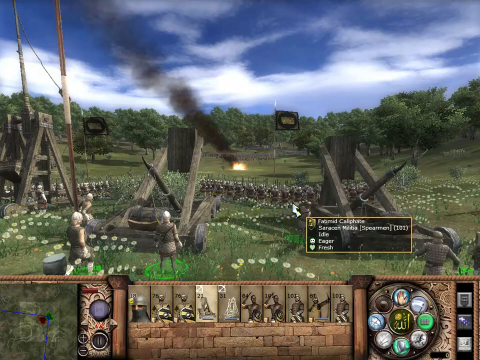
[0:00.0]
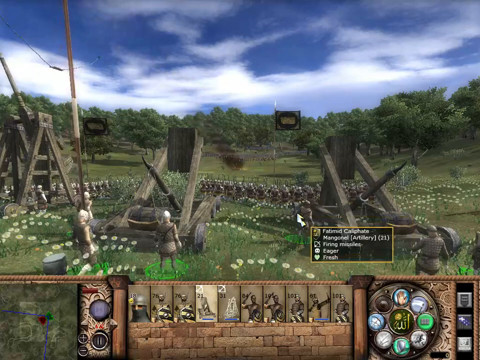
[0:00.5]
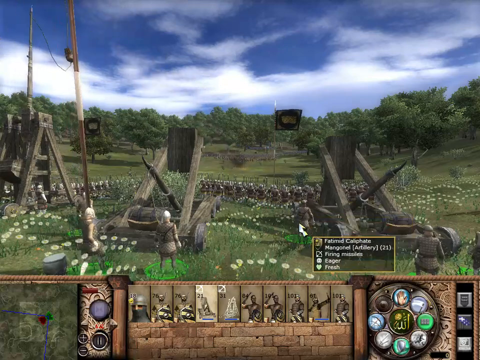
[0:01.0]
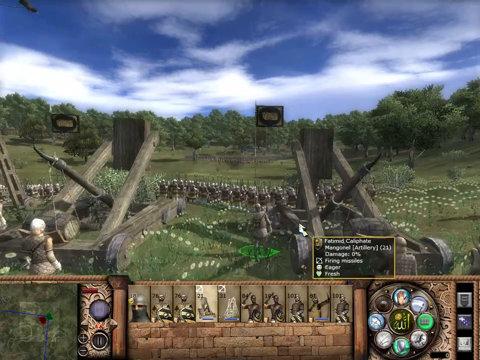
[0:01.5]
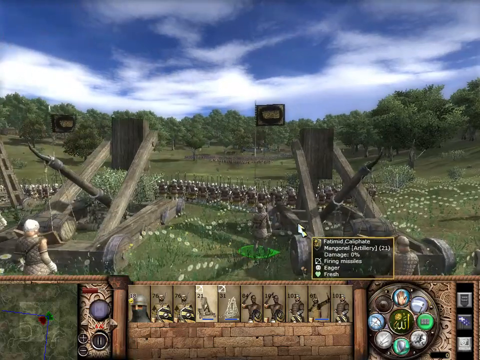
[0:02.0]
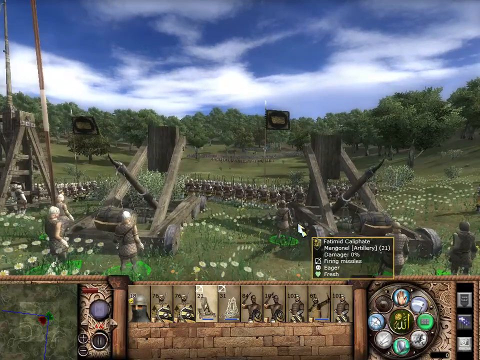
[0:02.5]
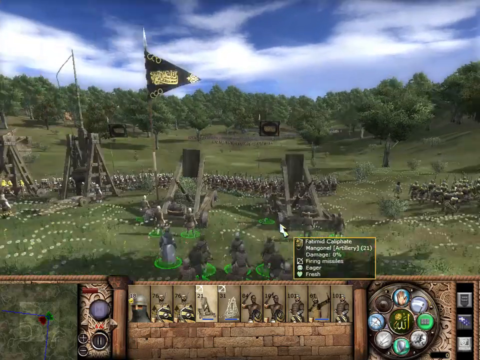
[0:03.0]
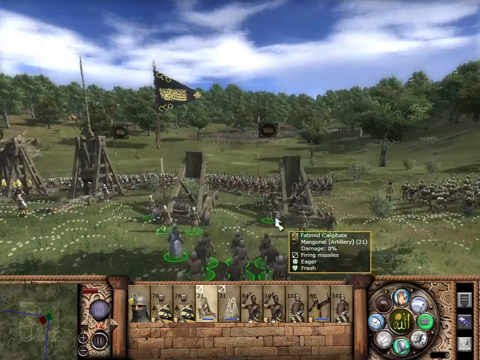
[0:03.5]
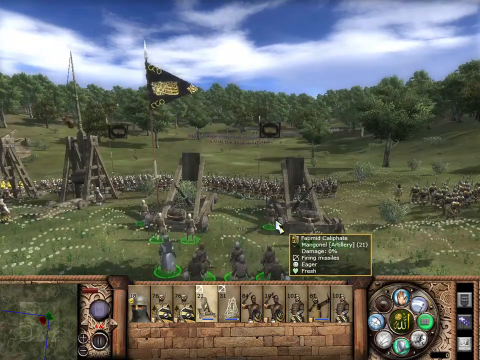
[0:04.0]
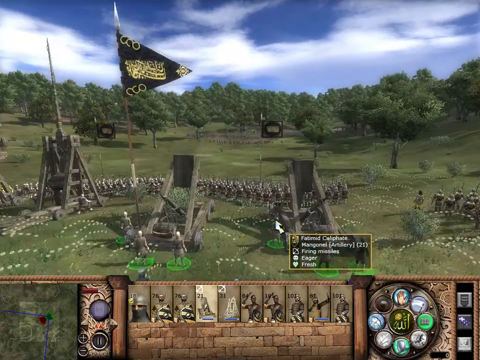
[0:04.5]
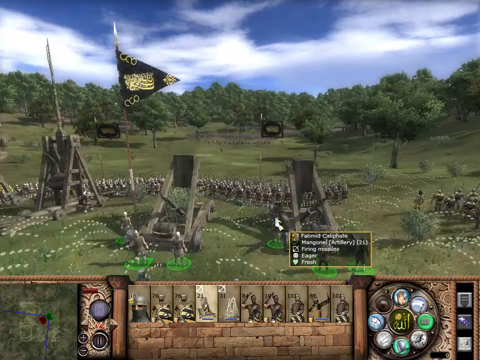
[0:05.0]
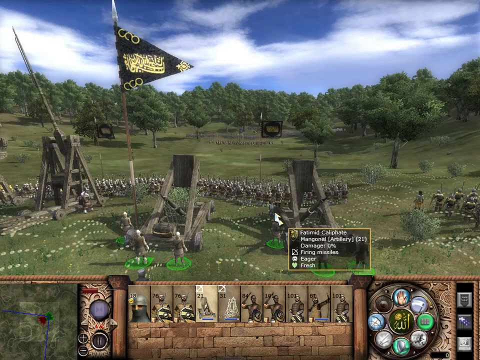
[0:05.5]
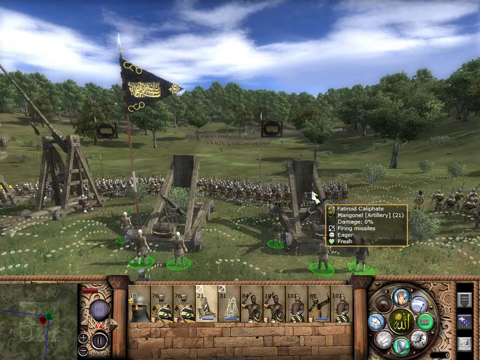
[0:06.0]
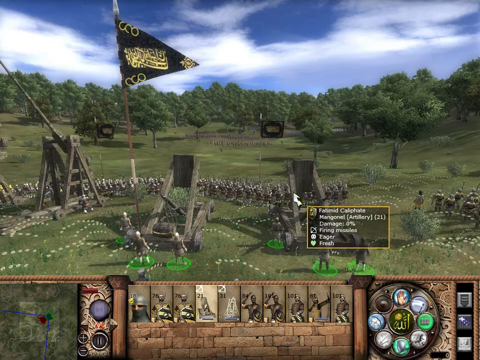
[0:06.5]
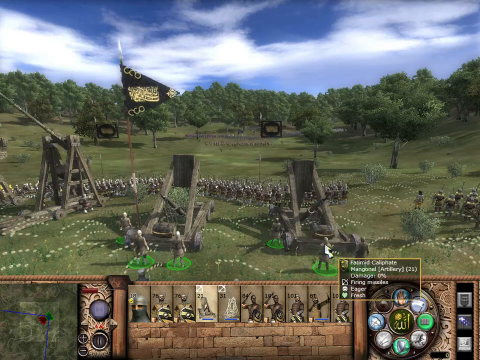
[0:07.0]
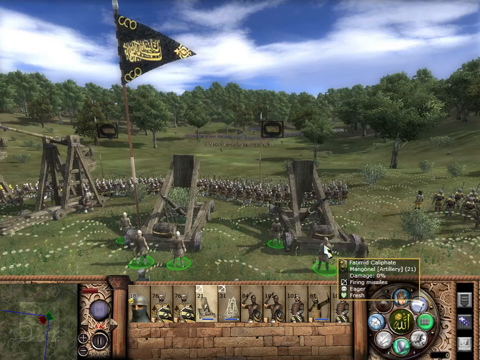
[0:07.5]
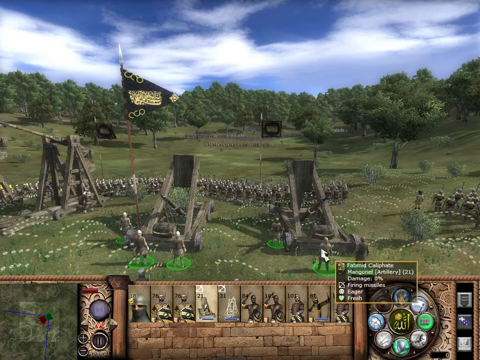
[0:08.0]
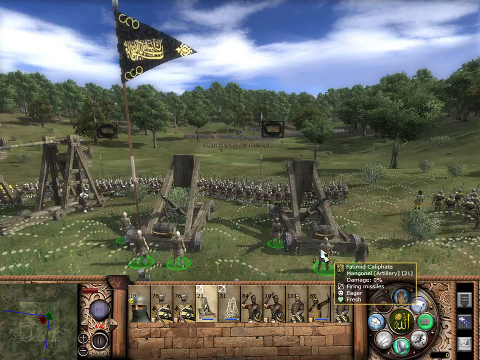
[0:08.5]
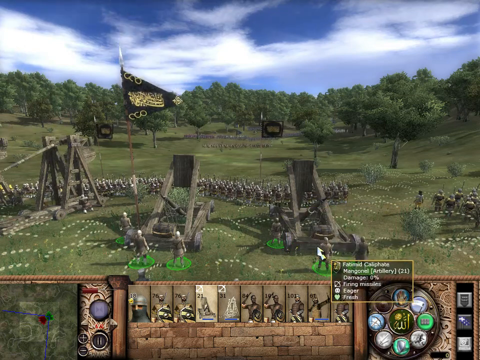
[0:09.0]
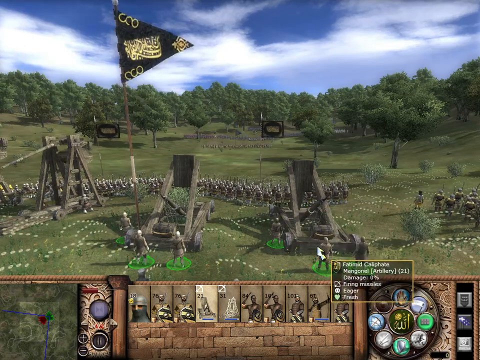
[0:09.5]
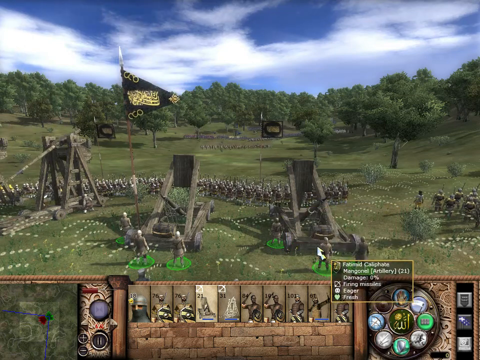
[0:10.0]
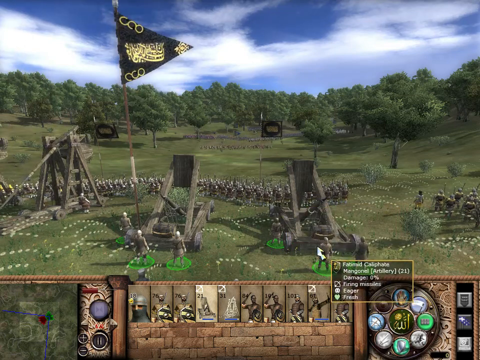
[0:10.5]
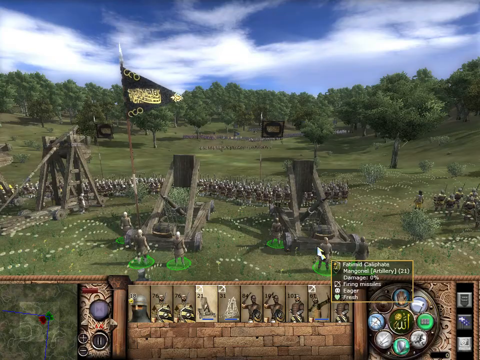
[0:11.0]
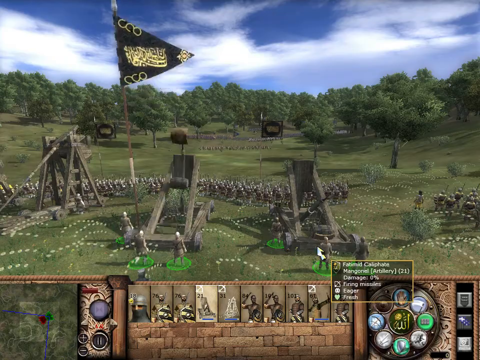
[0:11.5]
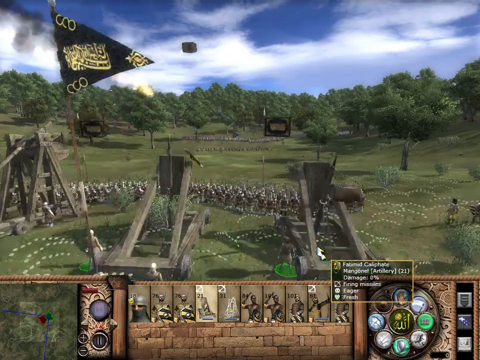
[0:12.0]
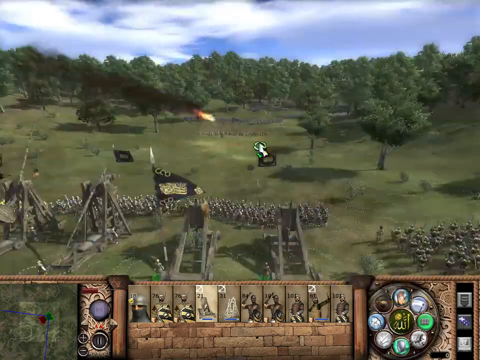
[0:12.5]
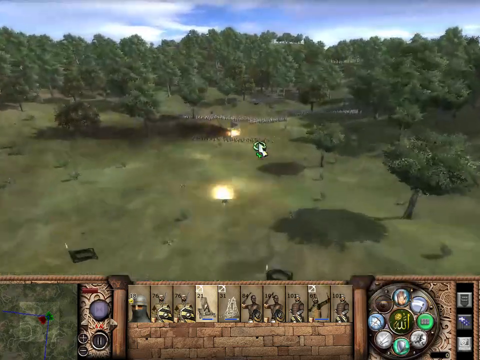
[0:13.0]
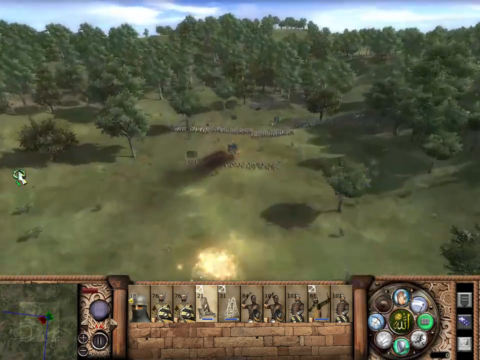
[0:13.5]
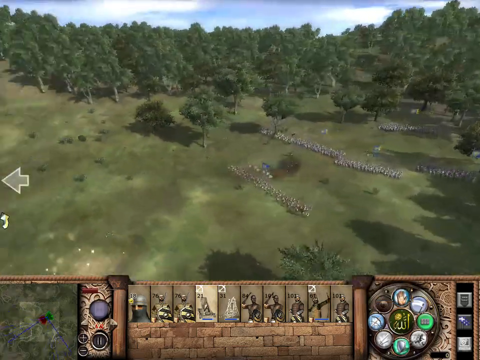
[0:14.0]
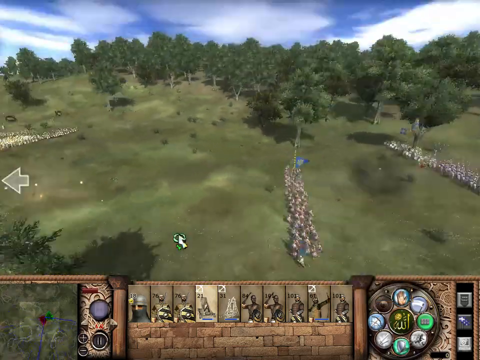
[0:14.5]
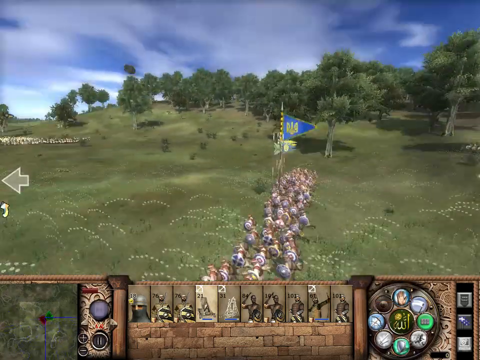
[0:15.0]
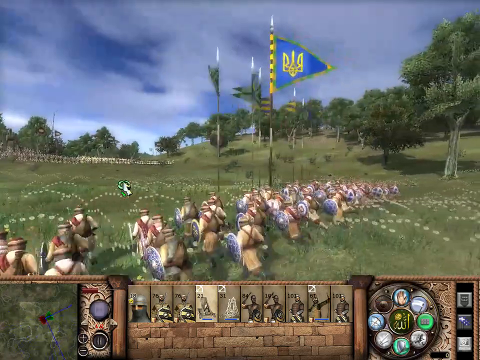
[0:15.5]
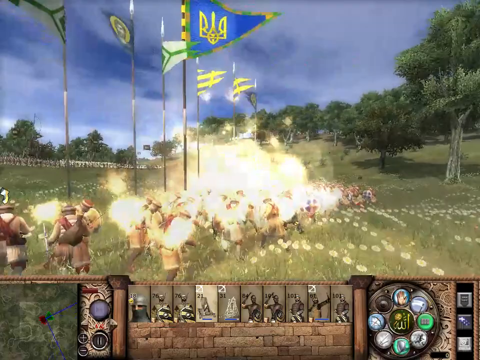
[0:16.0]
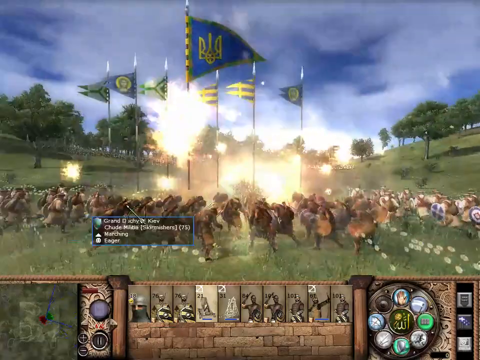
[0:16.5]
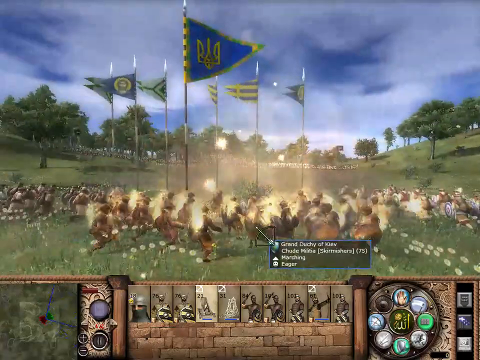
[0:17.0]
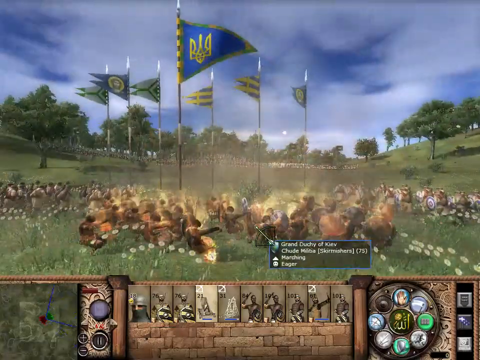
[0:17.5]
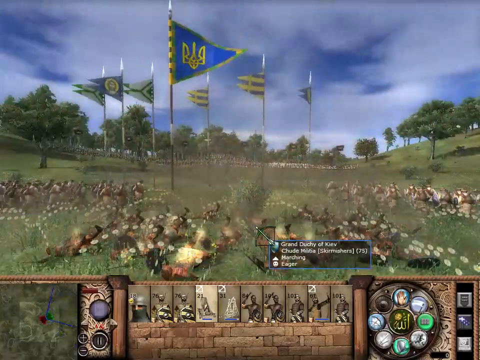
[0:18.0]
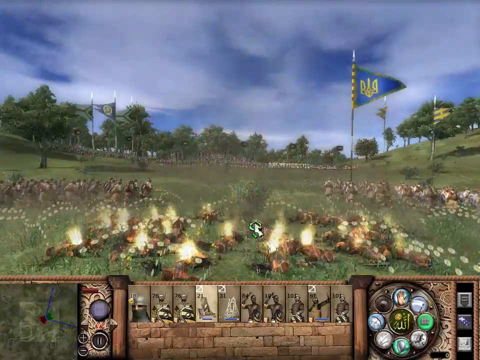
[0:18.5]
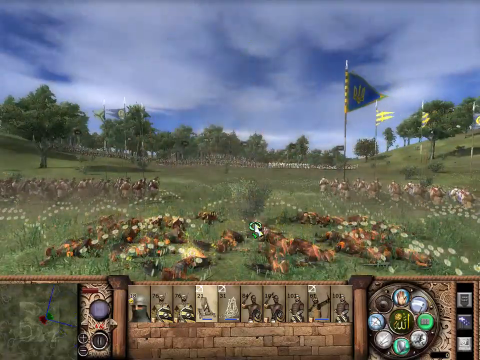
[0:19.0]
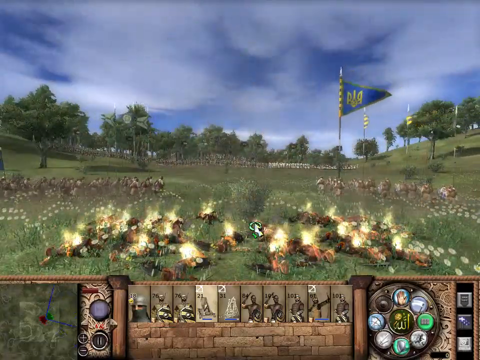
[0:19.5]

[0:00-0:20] This video game opens with blue skies that are somewhat cloudy, a horizon line, a bunch of trees and a lot of green. Flames appear, somewhat in the far distance, coming from wooden-looking artillery shell machines, and soldiers are taking part in what could be a war game. Smoke is in the air. A gold and black flag is brought up and down, and arrows are pointing, which seems to indicate it is windy. There are three flags. A bombing of the other side has just happened, and the artillery hits them. The game has an old-fashioned setting, possibly anywhere from the 1700s to the early 1900s, almost like the Civil War era. There is what looks like flowers on the ground, though they may not be flowers.